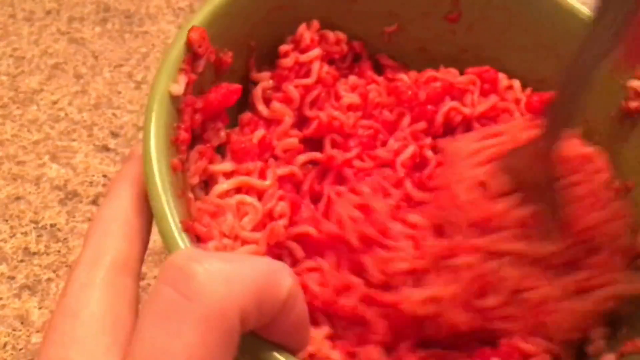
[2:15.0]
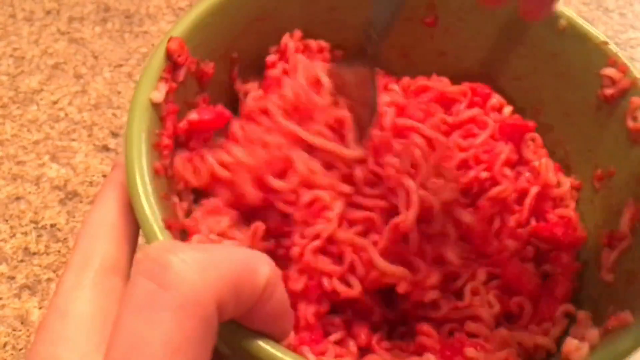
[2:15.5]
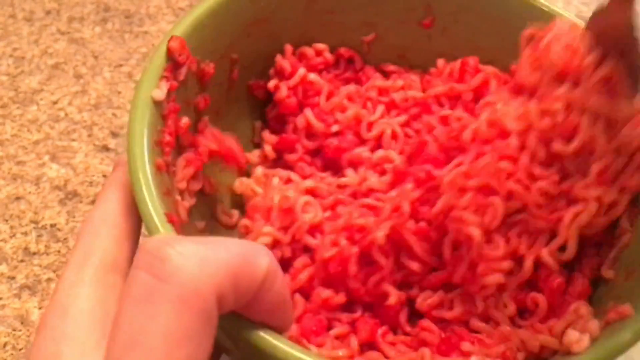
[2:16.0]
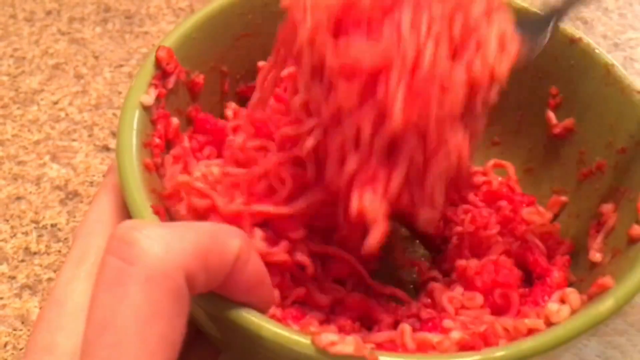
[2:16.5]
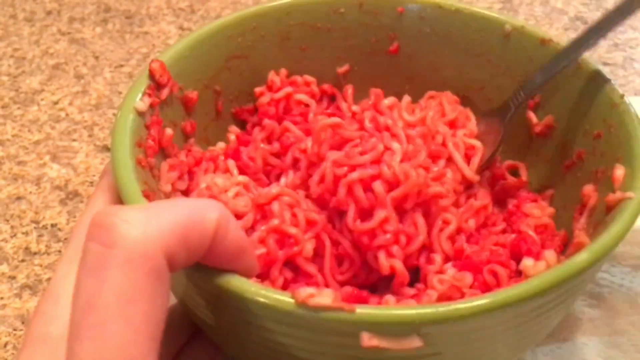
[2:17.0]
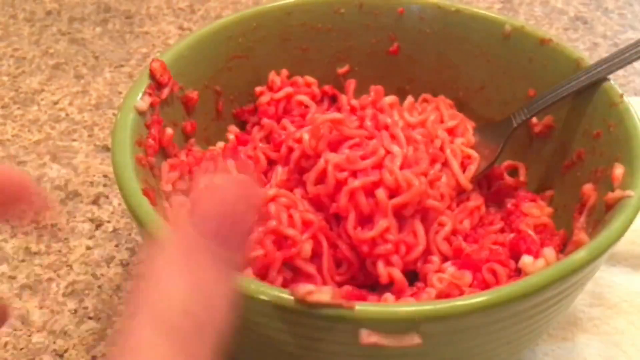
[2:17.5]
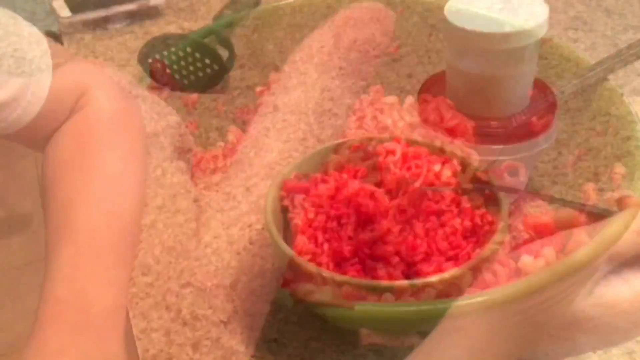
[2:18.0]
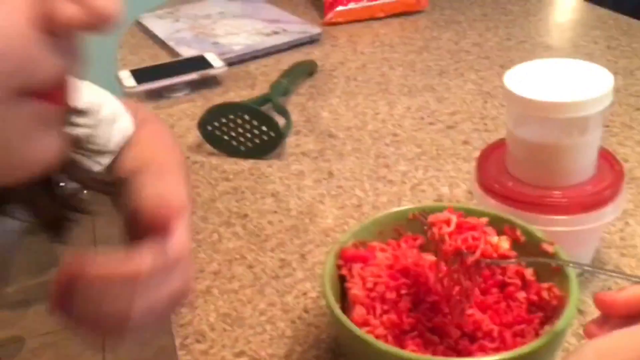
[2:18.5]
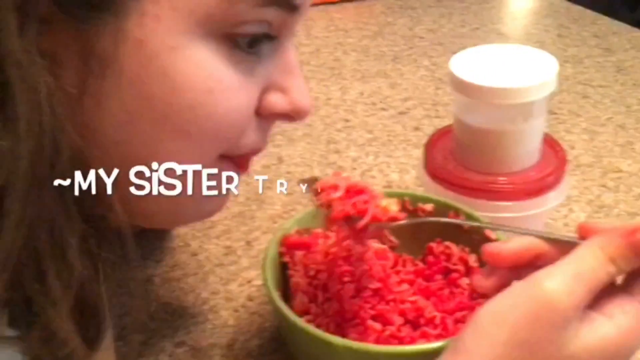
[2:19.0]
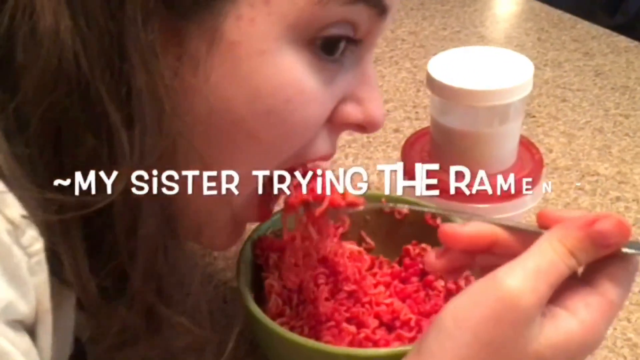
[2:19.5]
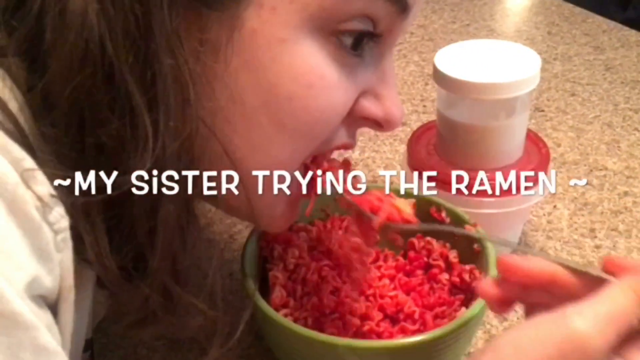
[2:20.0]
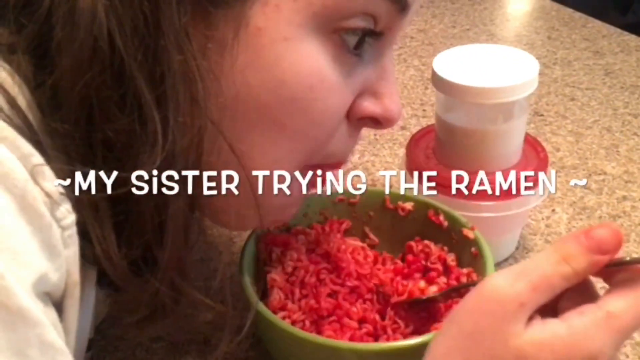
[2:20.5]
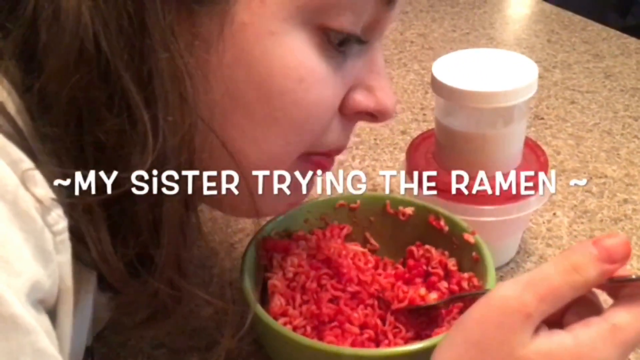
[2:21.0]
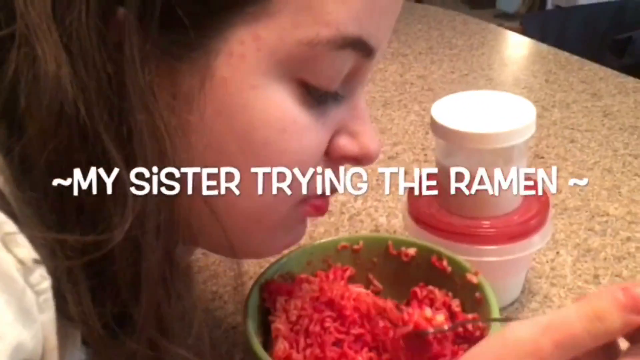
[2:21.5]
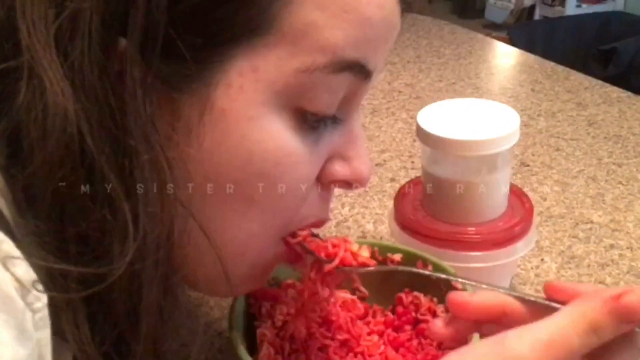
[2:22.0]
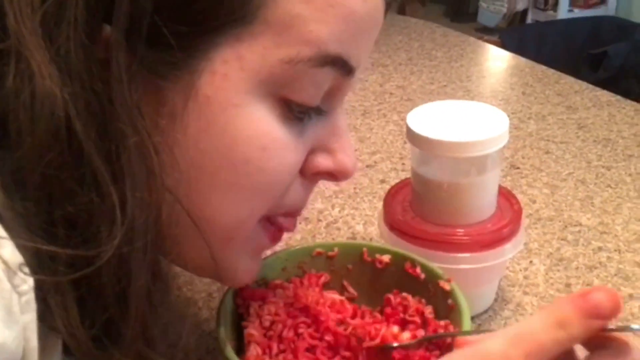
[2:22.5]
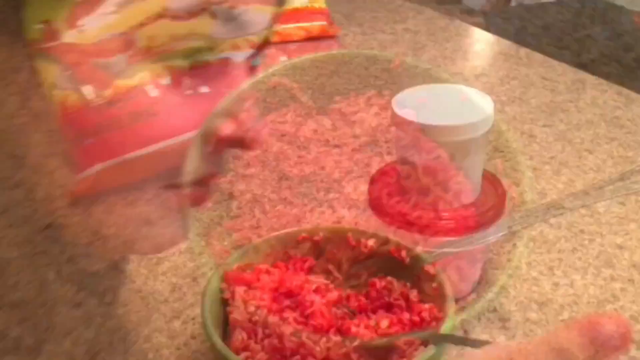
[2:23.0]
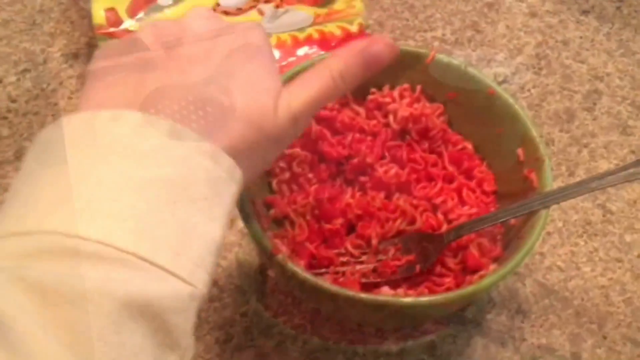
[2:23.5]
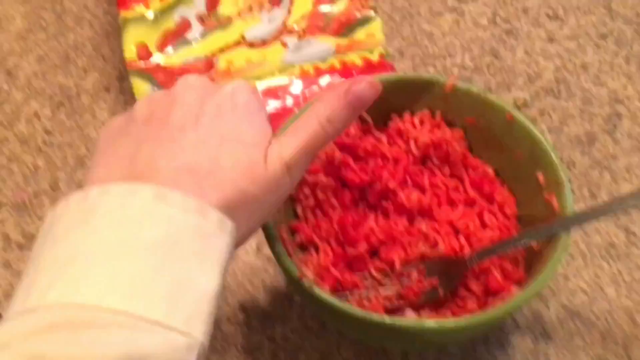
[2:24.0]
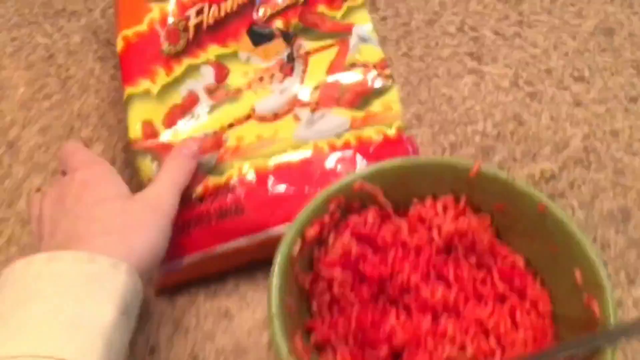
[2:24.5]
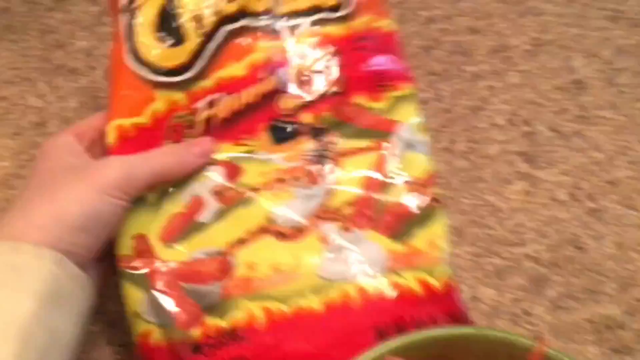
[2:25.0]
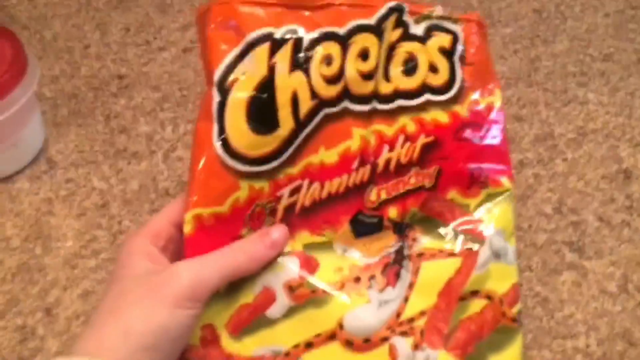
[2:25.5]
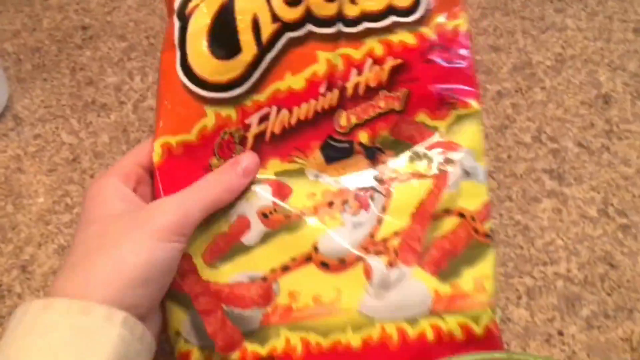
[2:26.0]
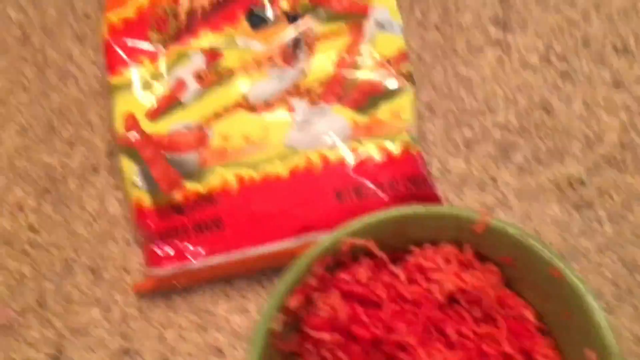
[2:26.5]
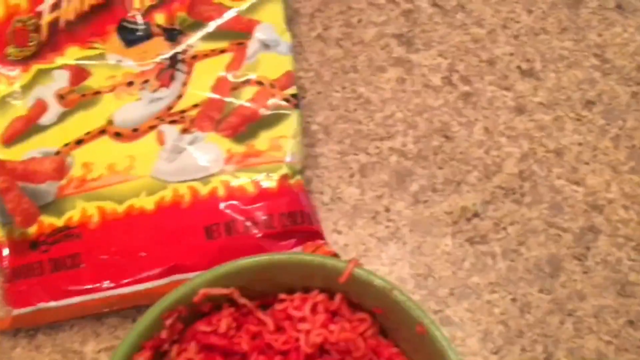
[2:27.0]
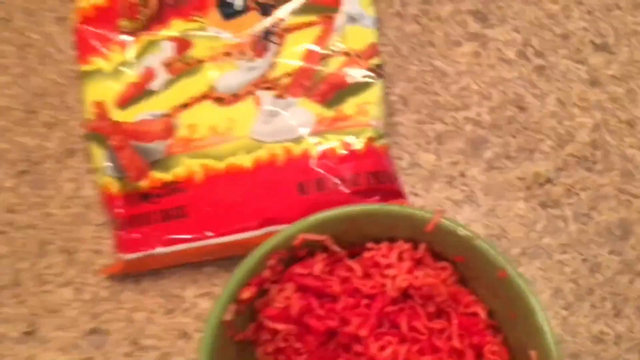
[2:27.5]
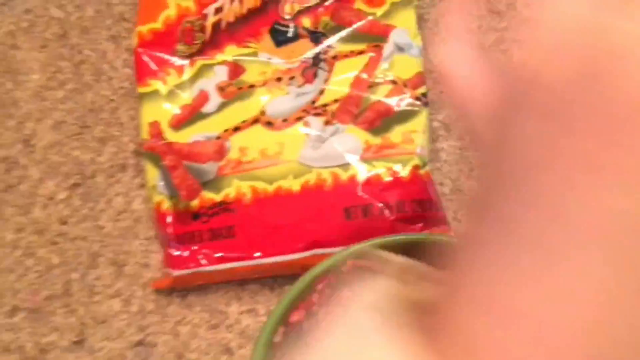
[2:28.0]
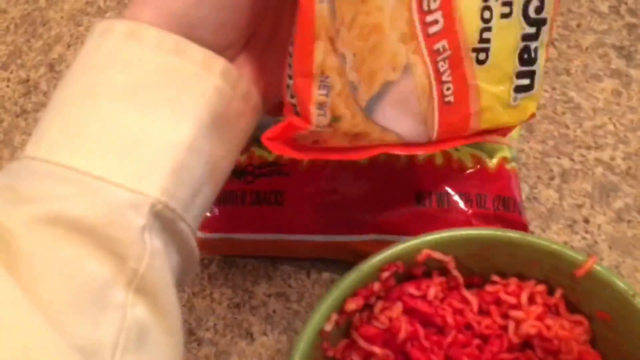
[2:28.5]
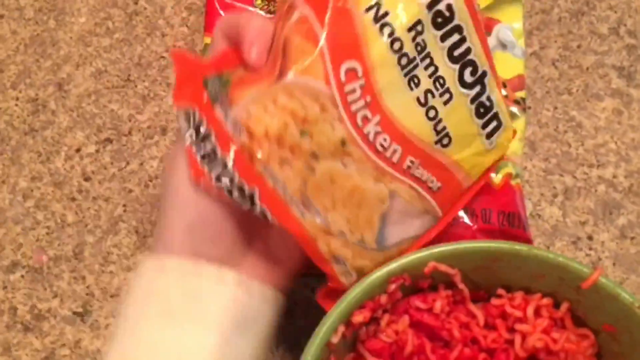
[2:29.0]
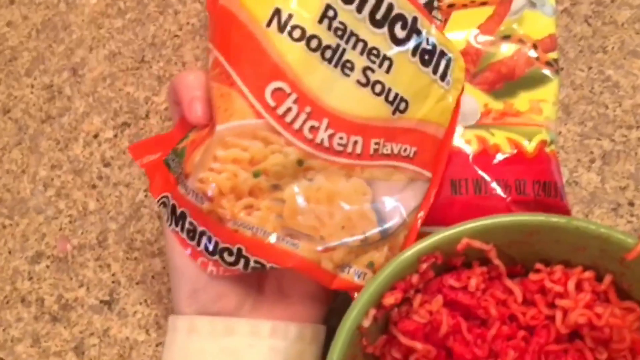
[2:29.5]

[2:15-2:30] The green ceramic cereal bowl contains the mixed ramen noodles and smashed Flaming Hot Cheetos. A child, a girl, is seen sitting at the countertop holding the fork, with text reading "my sister trying the ramen". To the left of the bowl and up above it there seem to be two Tupperware containers: the slightly larger one on the bottom is clear with a red cap, and the top one is clear with a white cap. The girl picks up the bag of Flaming Hot Cheetos and shows it to the camera, then pulls the ramen noodle soup package in from out of frame and shows it, and gives a thumbs up. She seems to be the same person who made the dish, as the shirt looks the same.